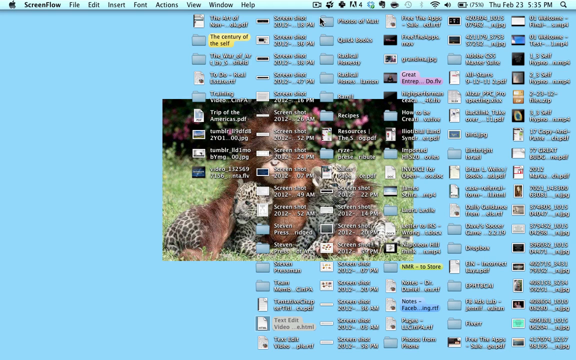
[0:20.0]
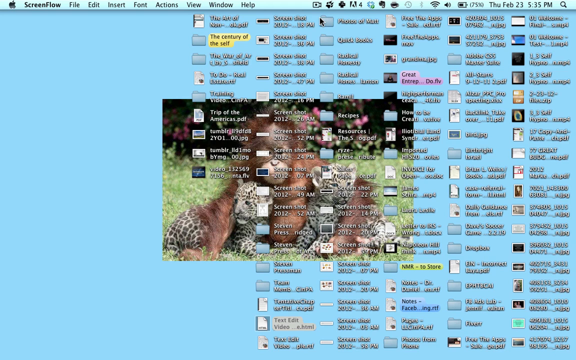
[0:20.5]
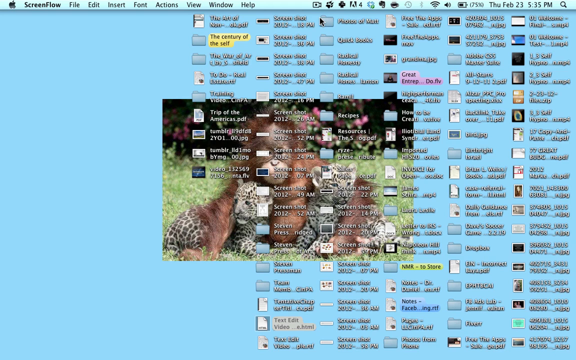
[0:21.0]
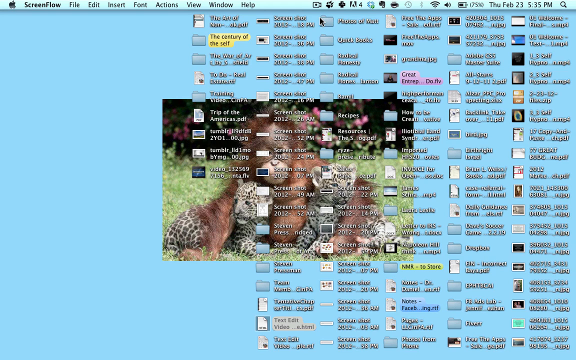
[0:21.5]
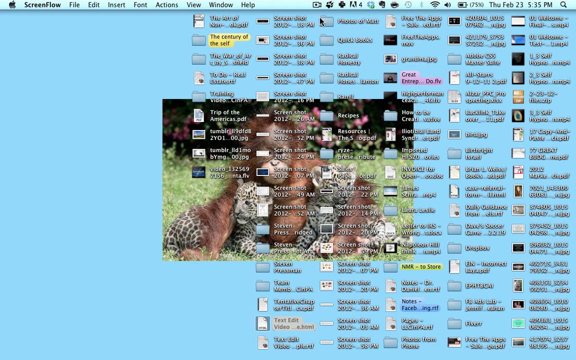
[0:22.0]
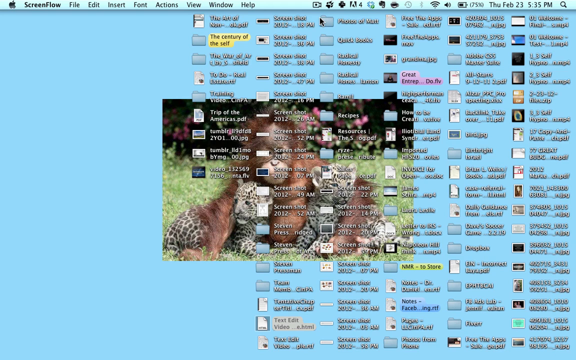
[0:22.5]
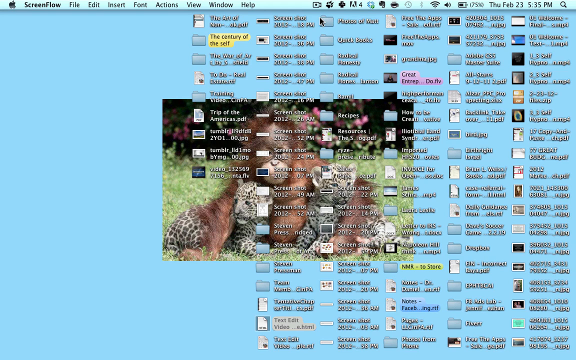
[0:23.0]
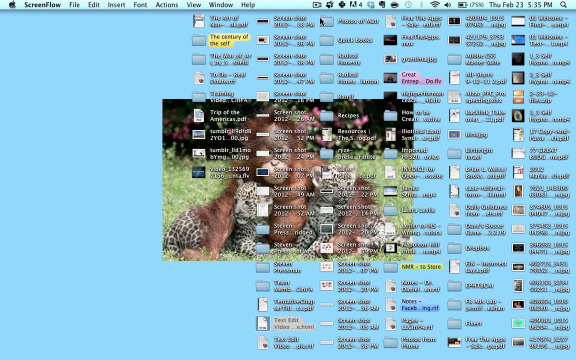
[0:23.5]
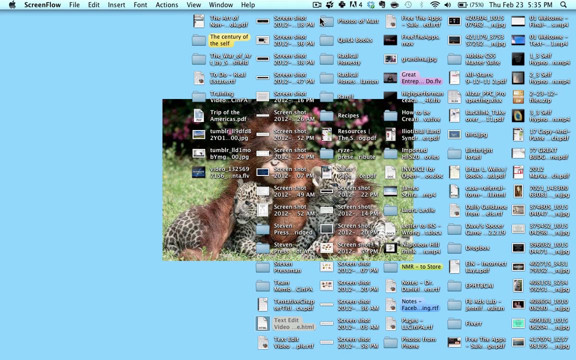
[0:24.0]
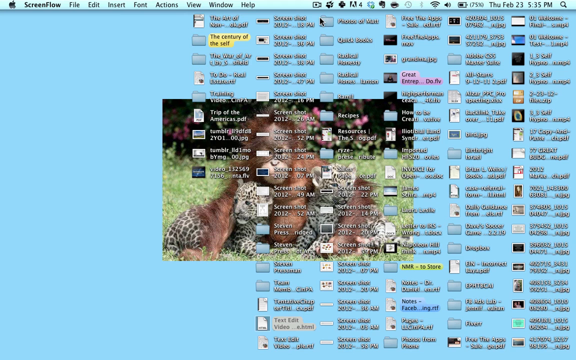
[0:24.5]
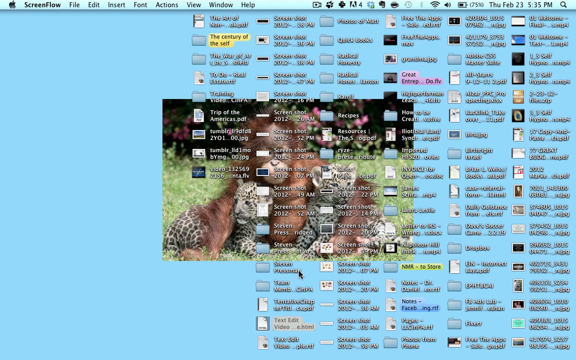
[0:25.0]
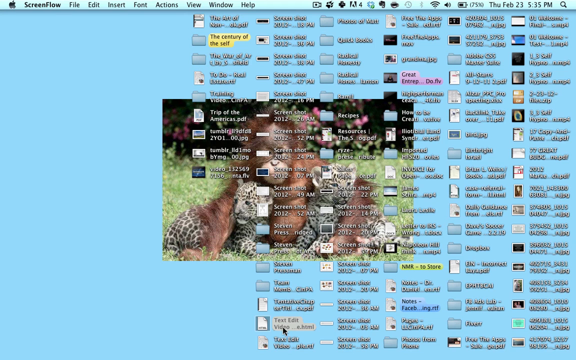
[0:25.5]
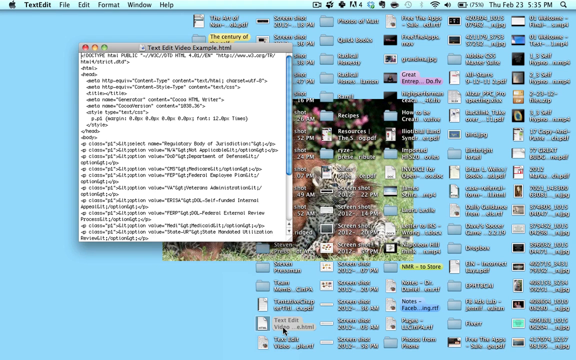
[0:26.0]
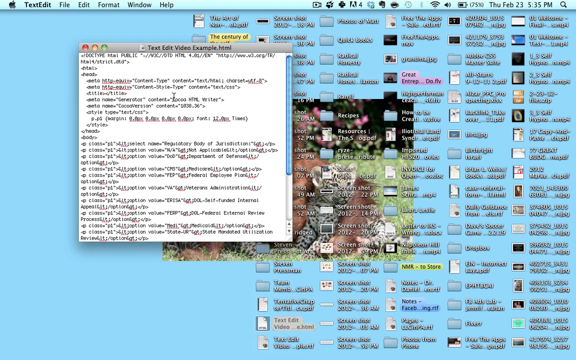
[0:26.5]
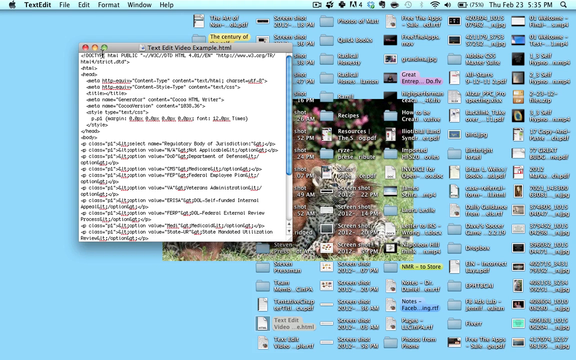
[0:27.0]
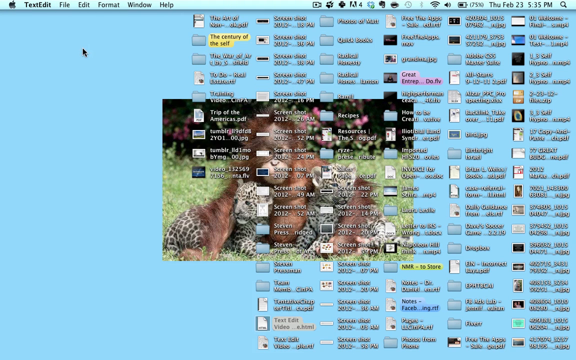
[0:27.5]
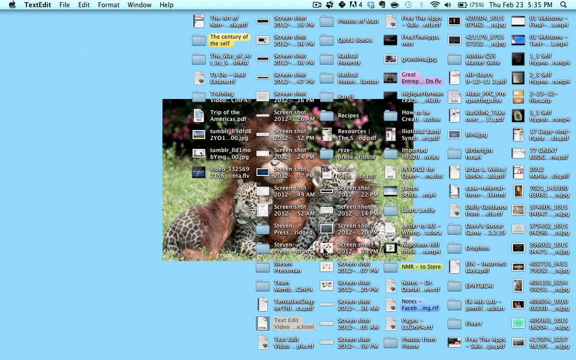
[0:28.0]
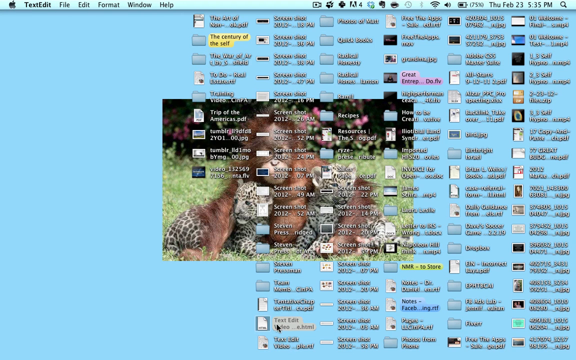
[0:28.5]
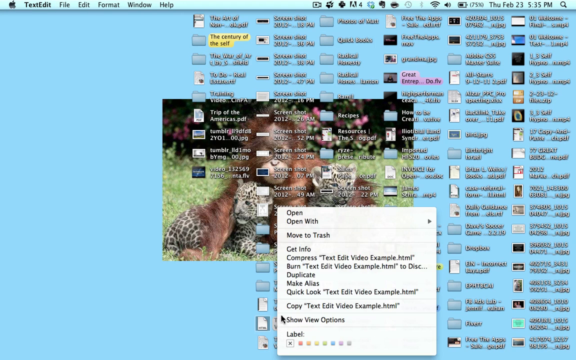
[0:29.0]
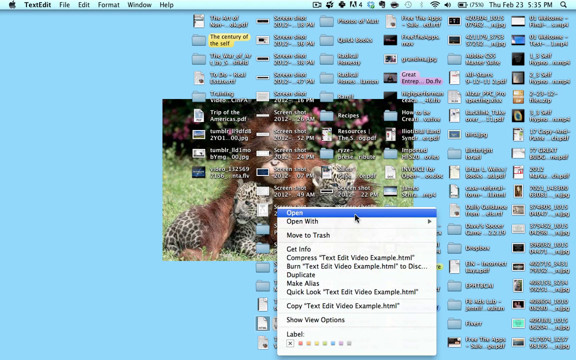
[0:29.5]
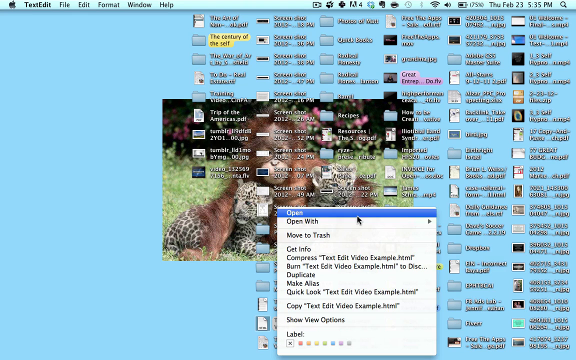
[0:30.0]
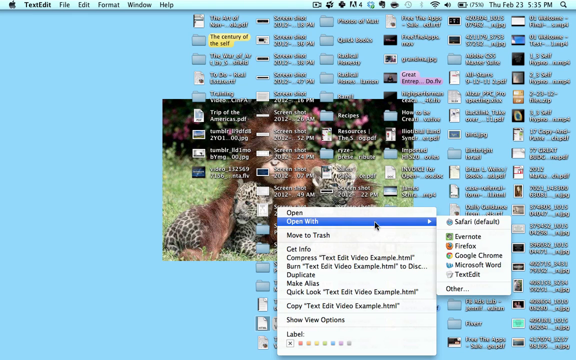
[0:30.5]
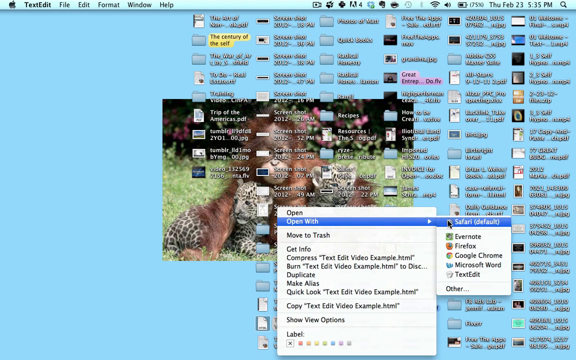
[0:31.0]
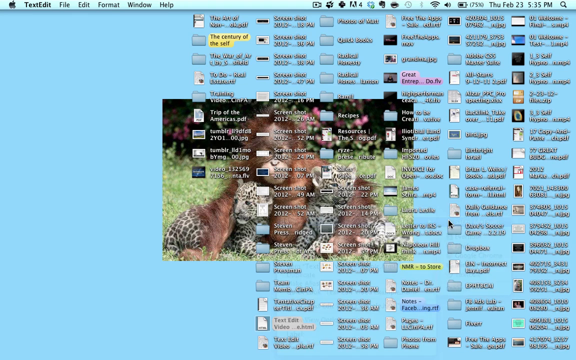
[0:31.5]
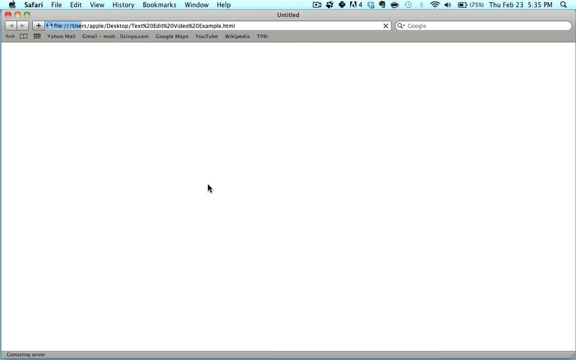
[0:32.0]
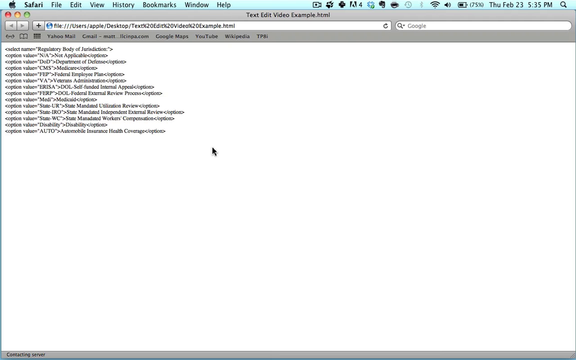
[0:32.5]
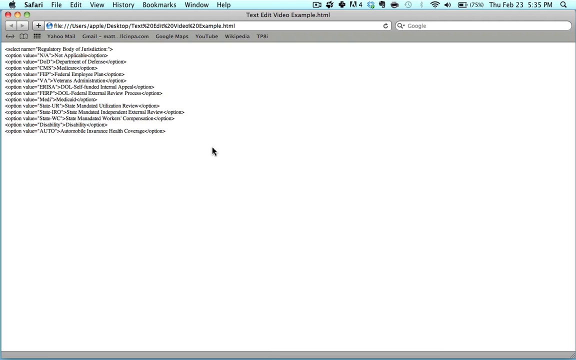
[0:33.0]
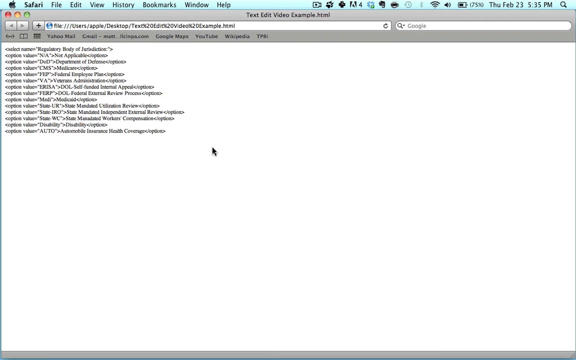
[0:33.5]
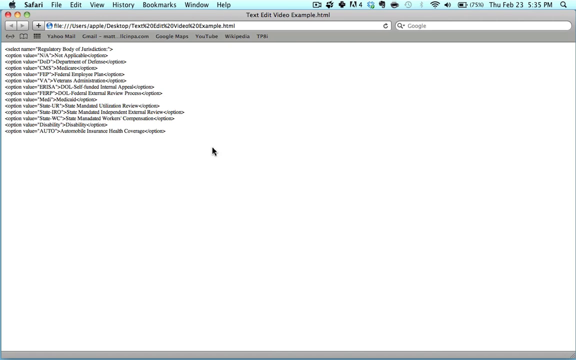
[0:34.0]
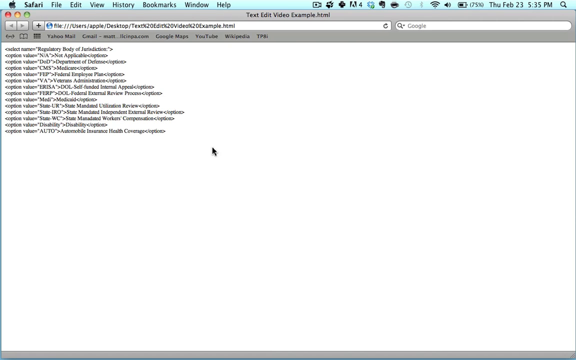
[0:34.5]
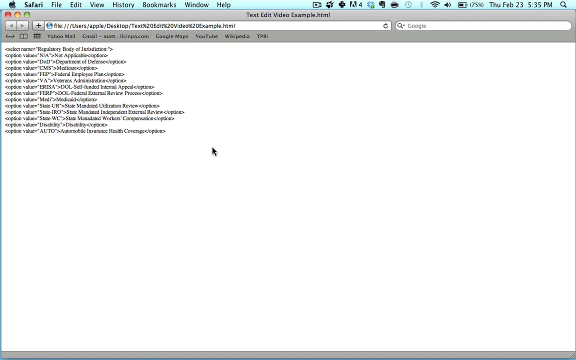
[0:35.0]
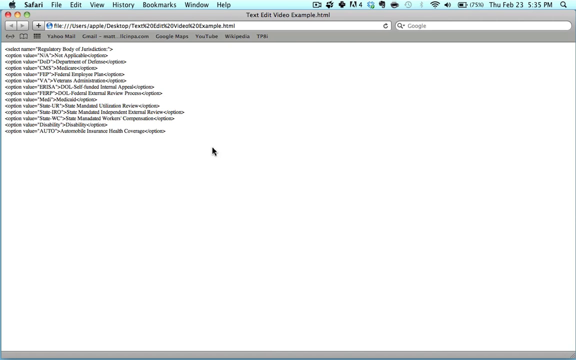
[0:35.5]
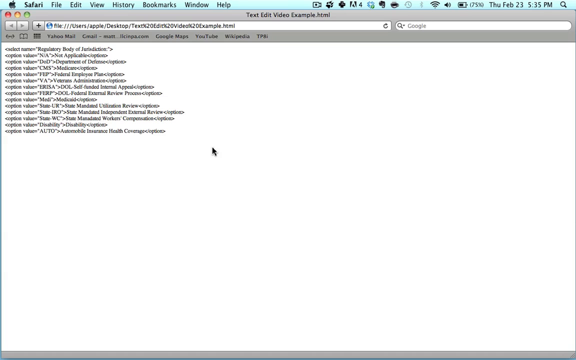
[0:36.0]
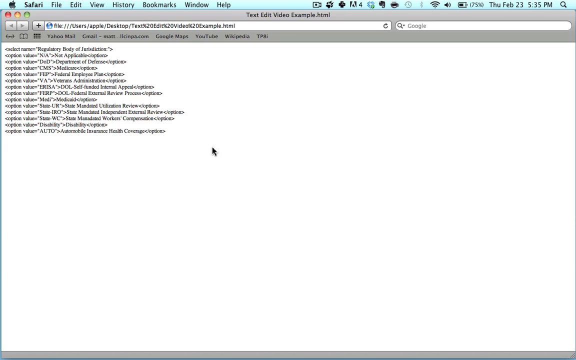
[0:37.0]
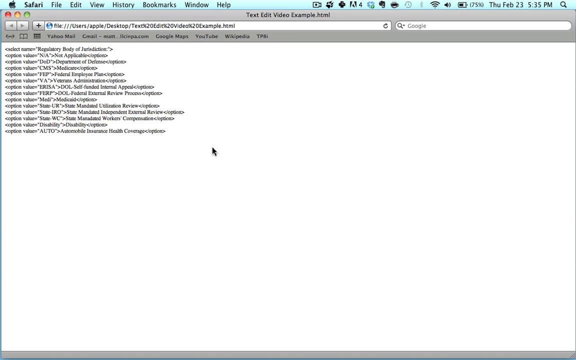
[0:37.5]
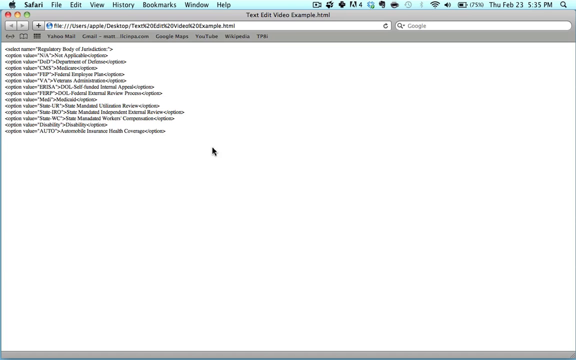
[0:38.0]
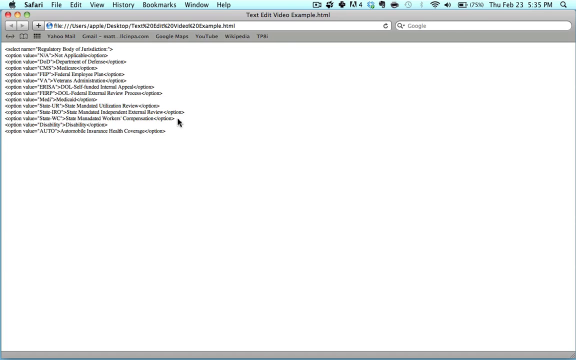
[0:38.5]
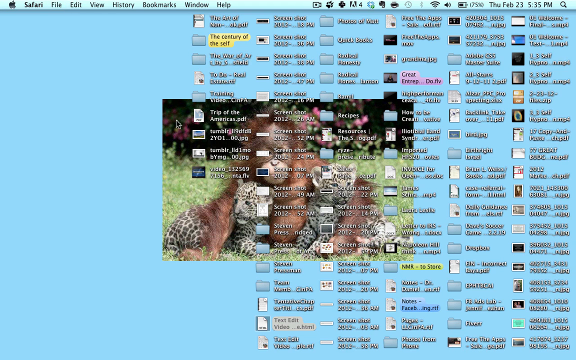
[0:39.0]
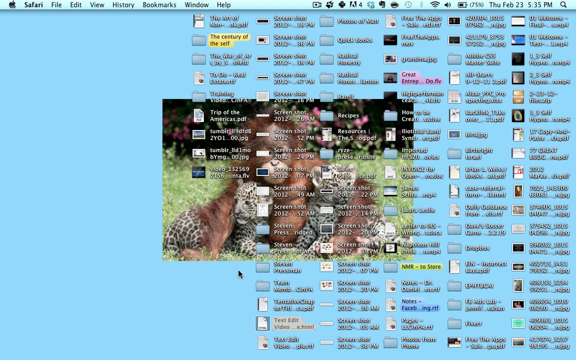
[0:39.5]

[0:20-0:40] The mouse cursor moves down to the lower right, to a file icon on the second-to-last row in the first column of that grid. They click it, and a window appears in the middle of the screen, slightly to the left, showing a document titled "texteditvideoexample.html" with multiple lines of HTML code filling the window. They click the red dot in the upper left corner of the window to close it, then right-click the same document icon to bring up the right-click menu. Its options are "open", "open with", "move to trash", "get info", "compress texteditvideoexample.html", "burn texteditvideoexample.html to disk", "duplicate", "make alias", "quick look texteditvideoexample.html", "copy texteditvideoexample.html", "show view options" and "label". They move to "open with" and click it, which opens another submenu to the right. They hover over Safari, the default, and open it. The document opens in Safari, and the Safari window consumes the entire desktop. The window is then closed, returning to the desktop.